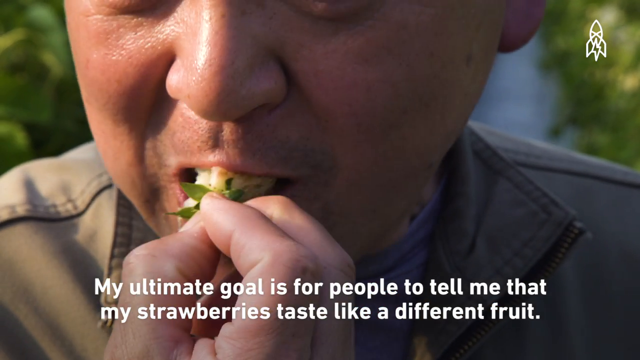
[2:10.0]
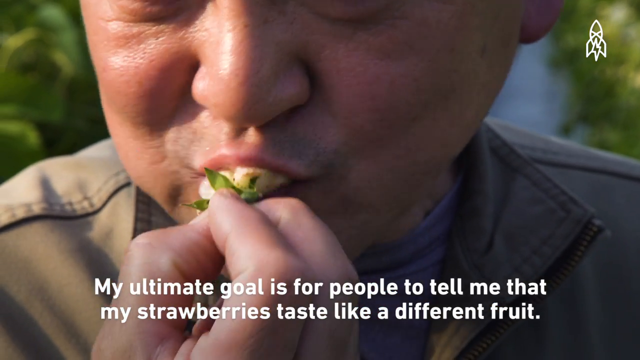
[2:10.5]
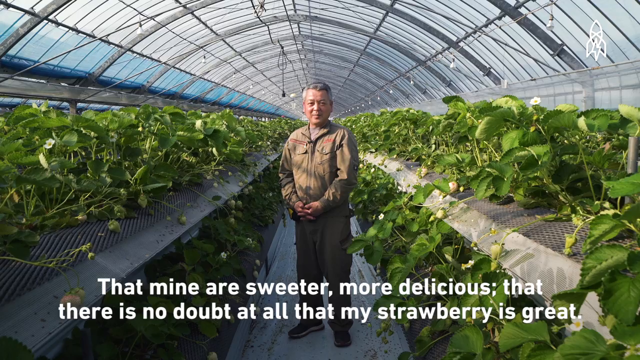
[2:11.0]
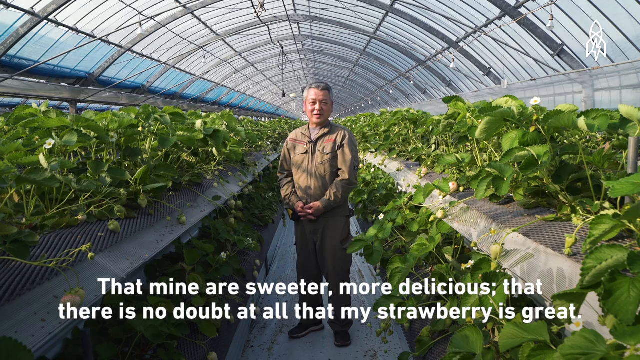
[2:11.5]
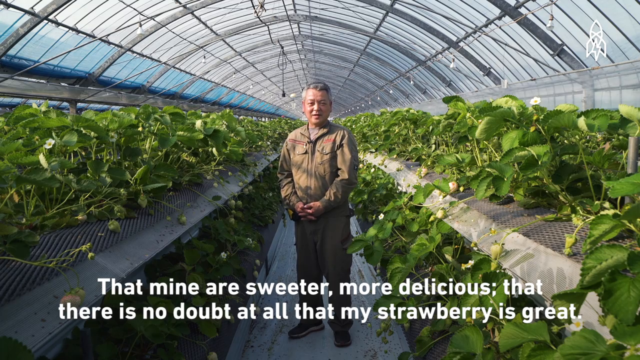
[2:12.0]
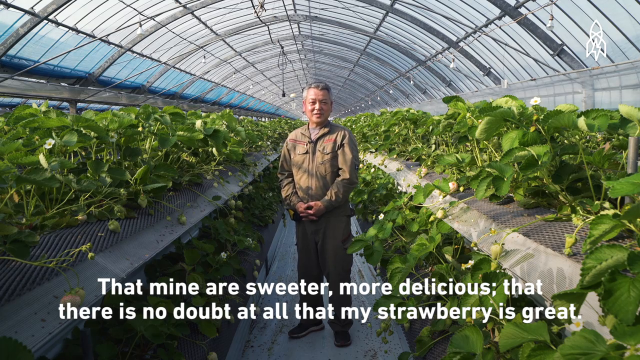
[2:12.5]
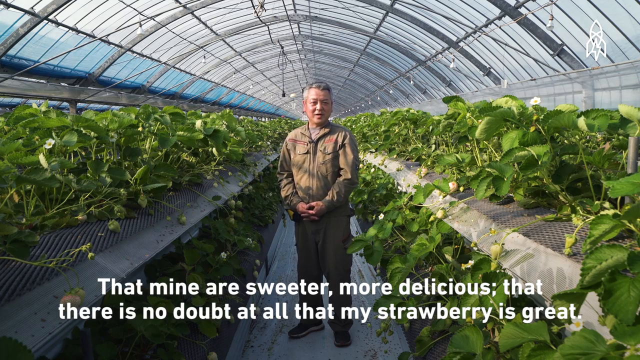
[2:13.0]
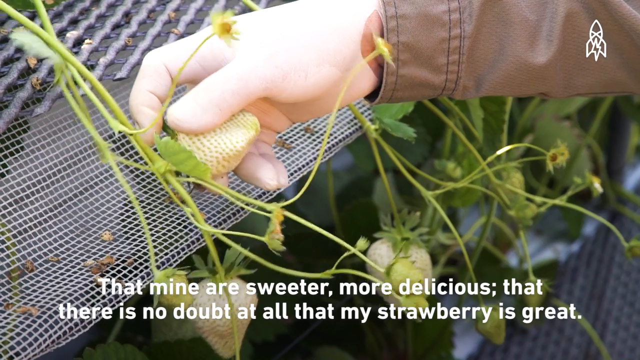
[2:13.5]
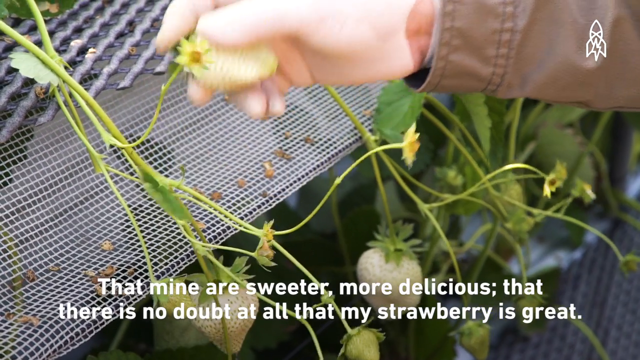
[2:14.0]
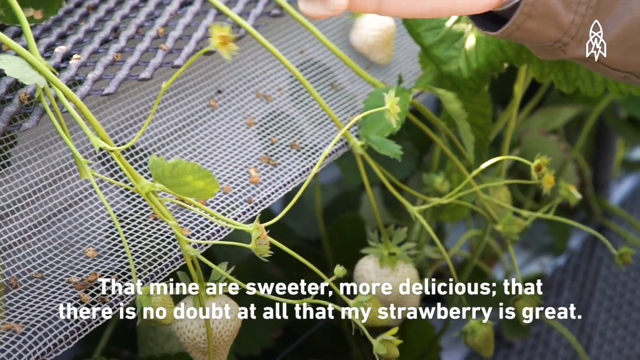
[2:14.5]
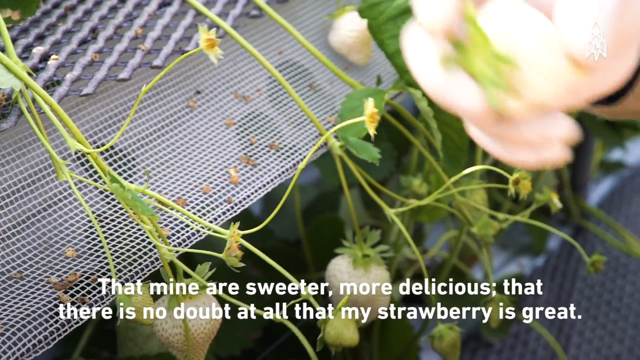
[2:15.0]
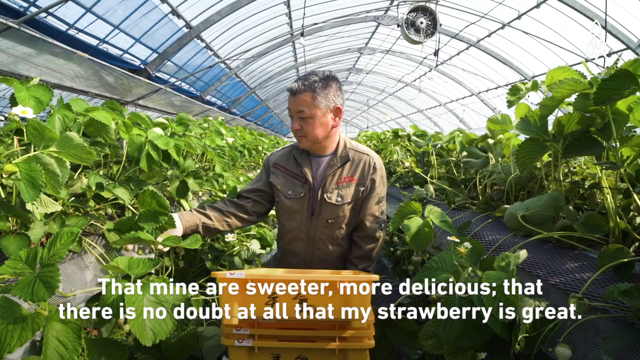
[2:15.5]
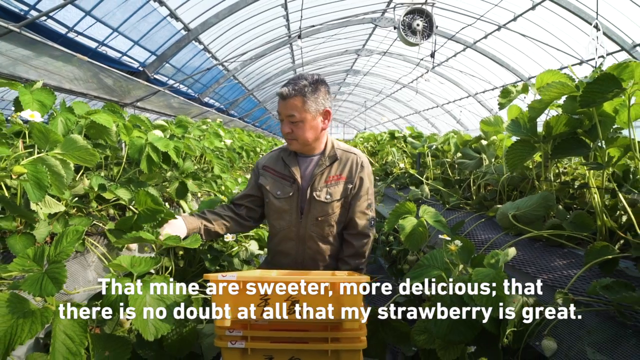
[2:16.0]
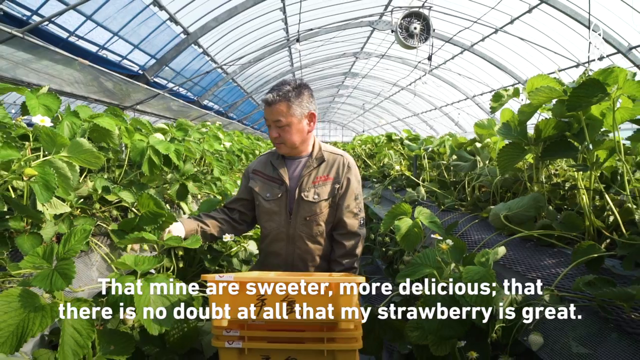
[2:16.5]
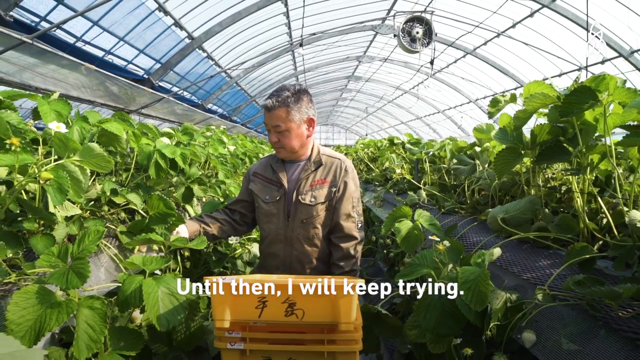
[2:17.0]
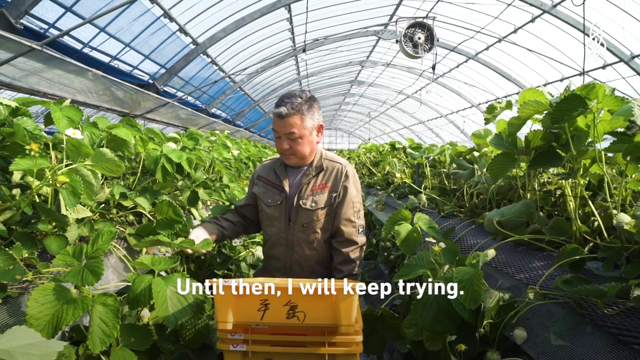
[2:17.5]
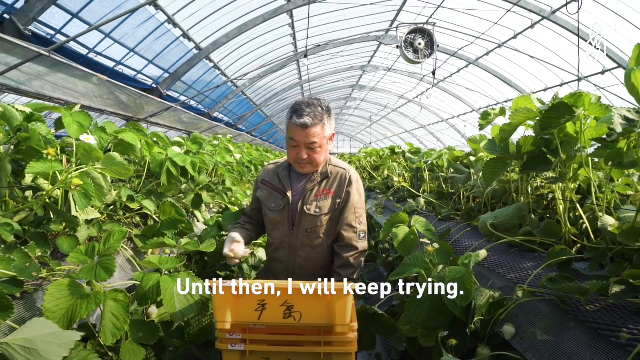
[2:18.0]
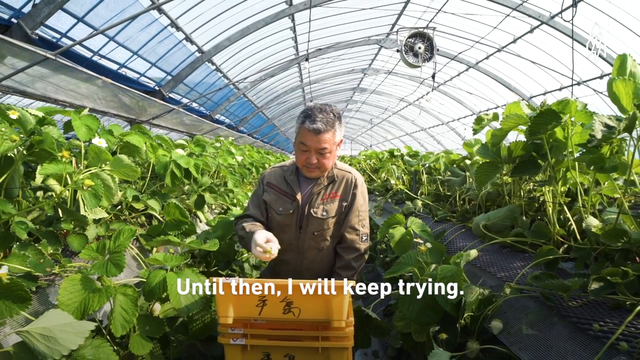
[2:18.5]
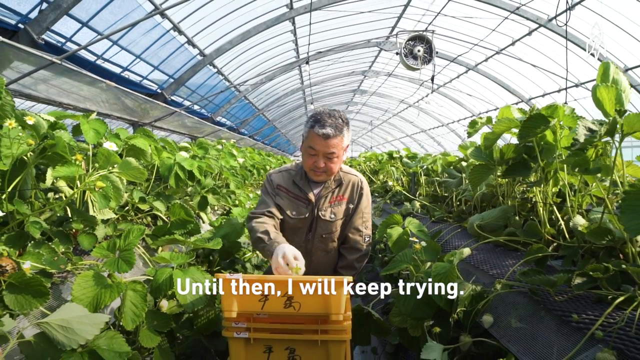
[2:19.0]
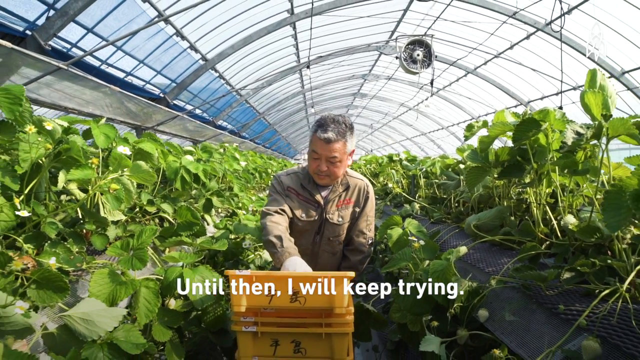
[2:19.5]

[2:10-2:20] Mr. Tashima eats the white strawberries again, picks them off their branches and places them into the yellow bins for cleaning and filtration. He seems very content in his job, and the video seems like some type of ecological or scientific documentary.